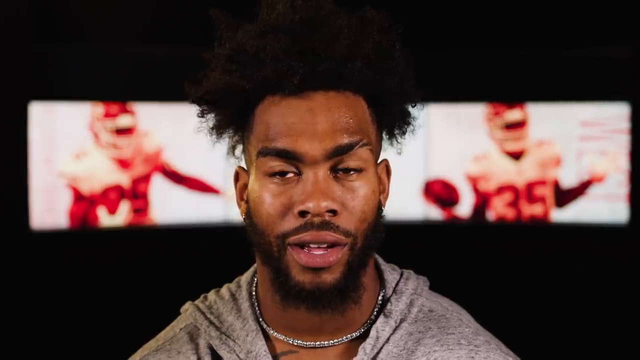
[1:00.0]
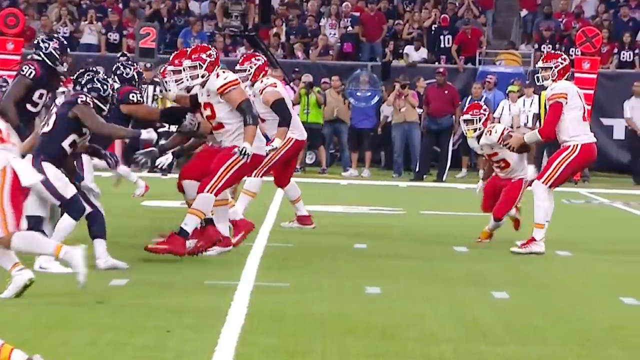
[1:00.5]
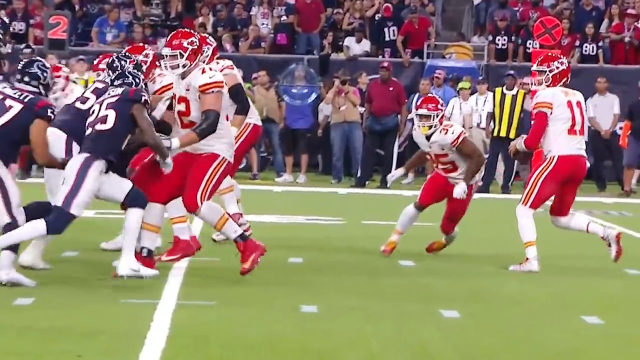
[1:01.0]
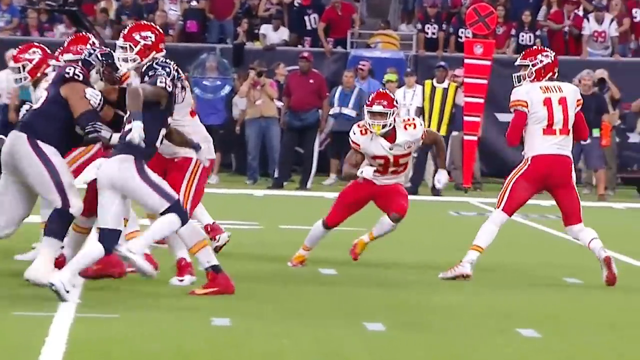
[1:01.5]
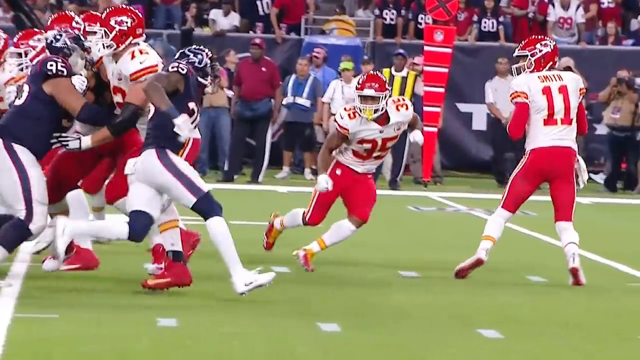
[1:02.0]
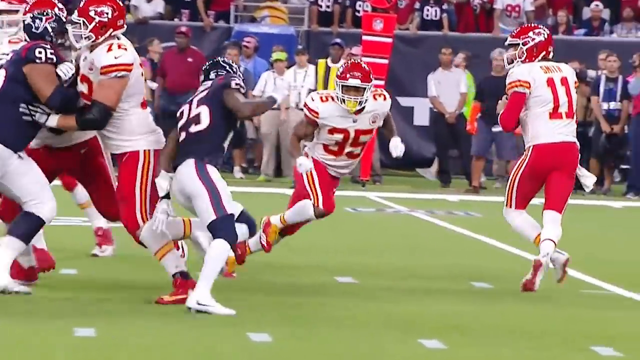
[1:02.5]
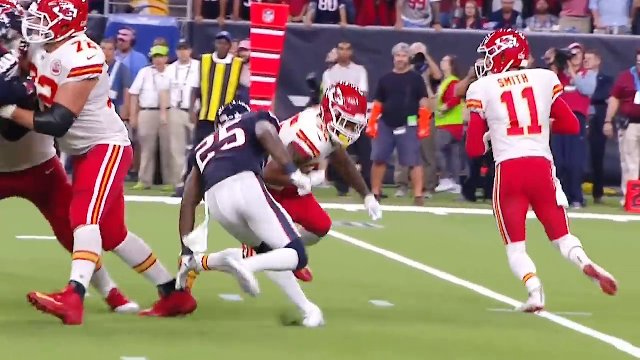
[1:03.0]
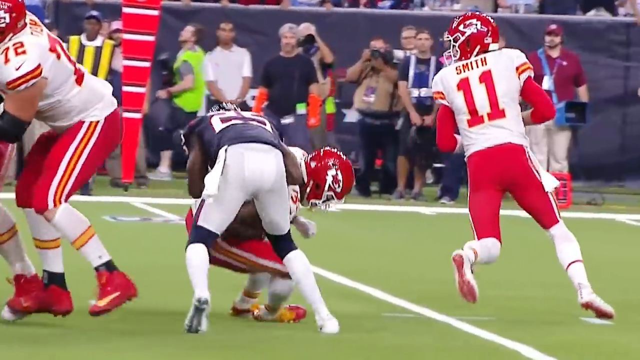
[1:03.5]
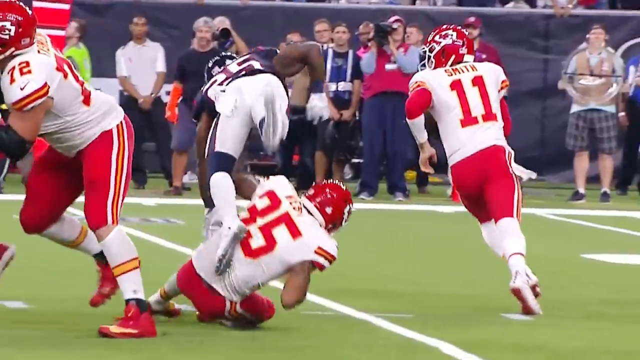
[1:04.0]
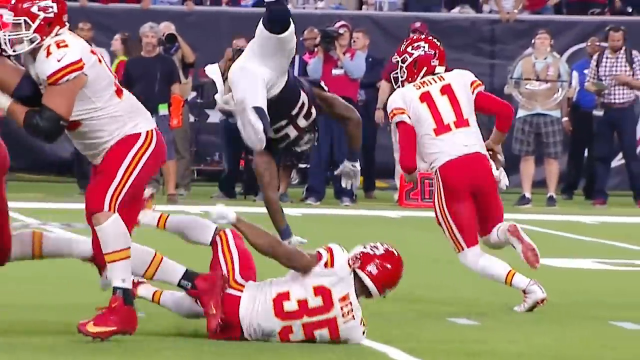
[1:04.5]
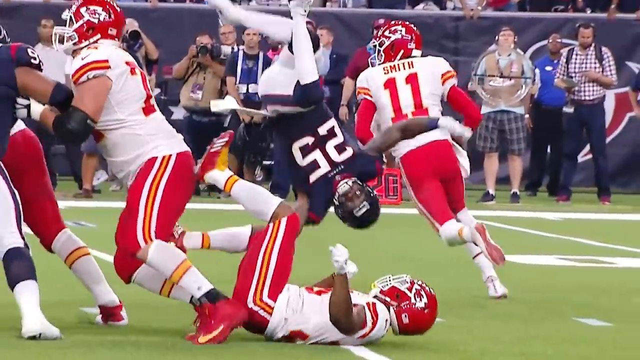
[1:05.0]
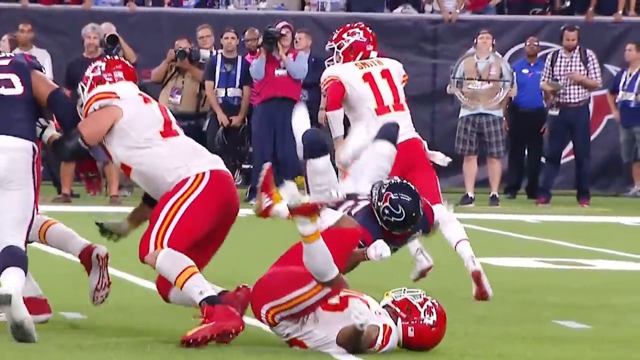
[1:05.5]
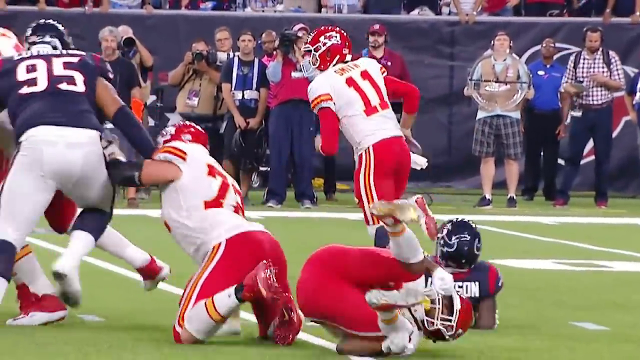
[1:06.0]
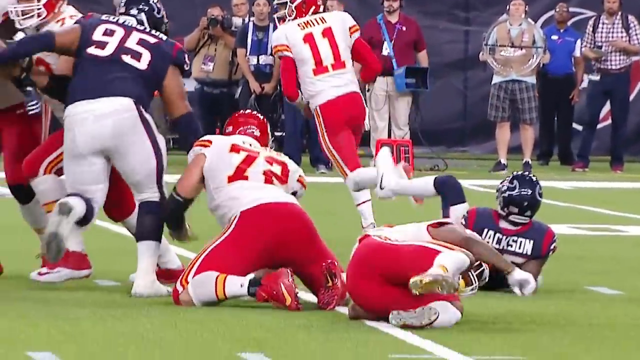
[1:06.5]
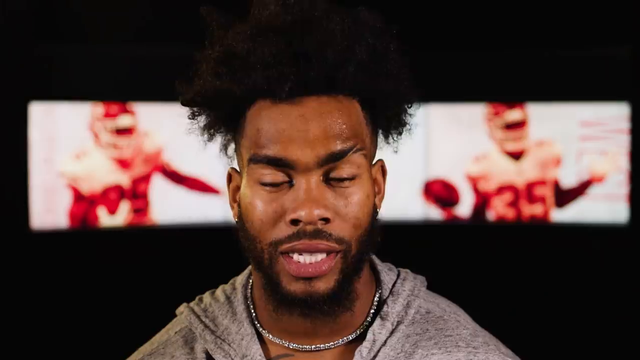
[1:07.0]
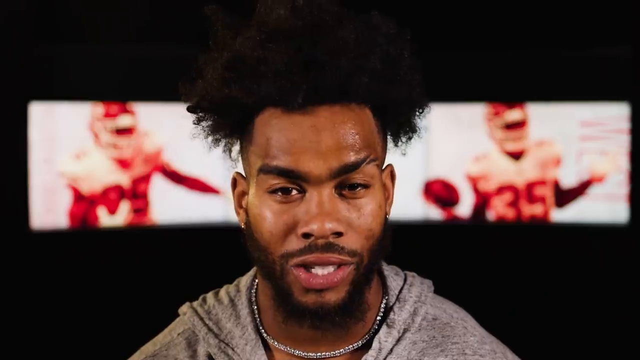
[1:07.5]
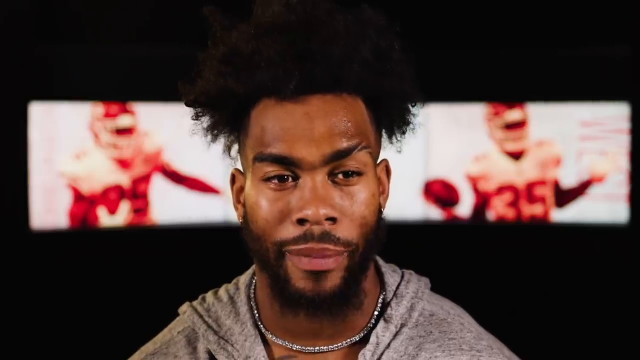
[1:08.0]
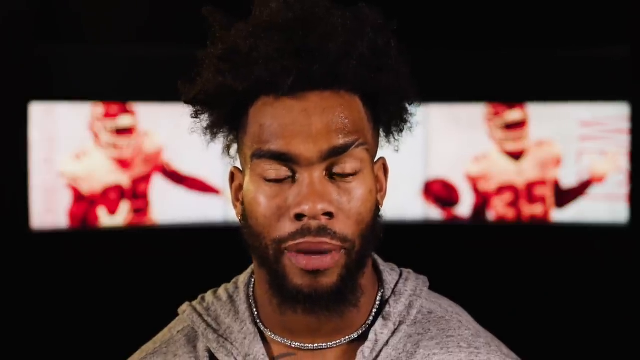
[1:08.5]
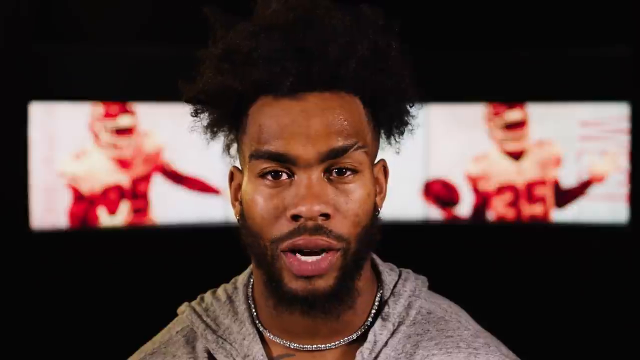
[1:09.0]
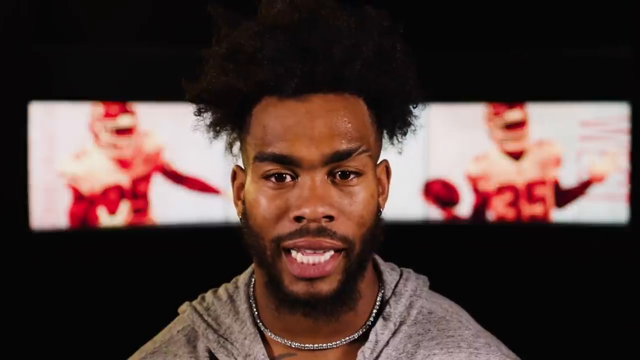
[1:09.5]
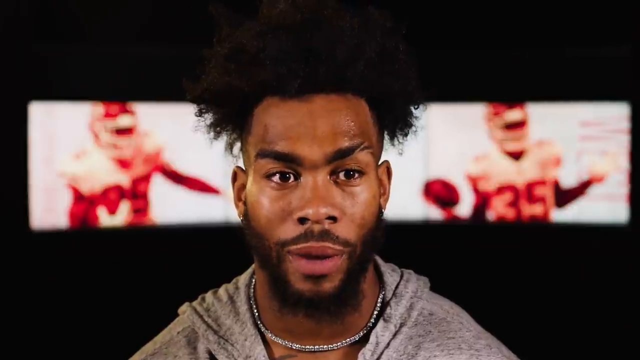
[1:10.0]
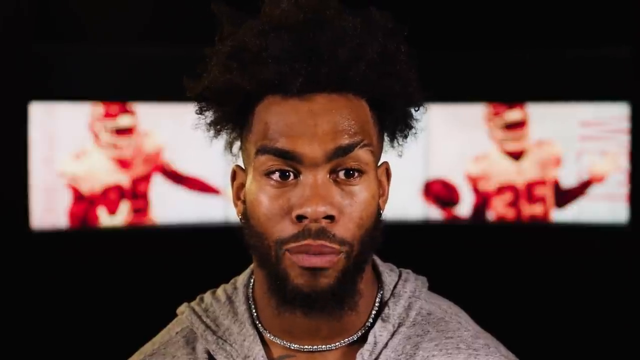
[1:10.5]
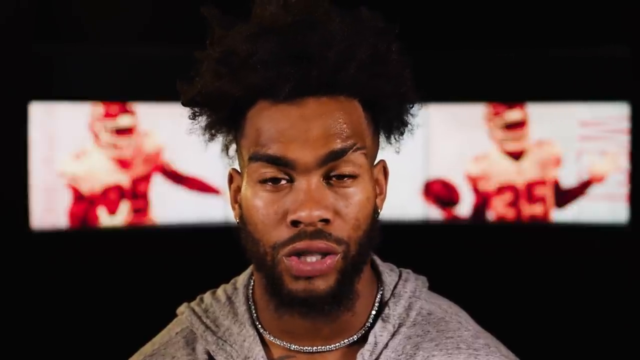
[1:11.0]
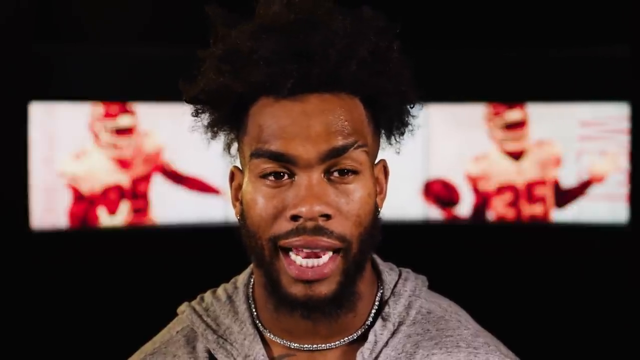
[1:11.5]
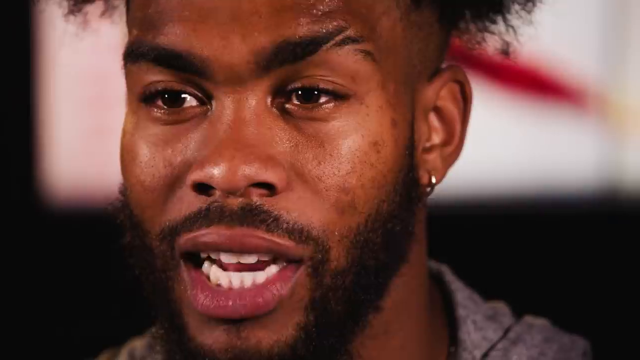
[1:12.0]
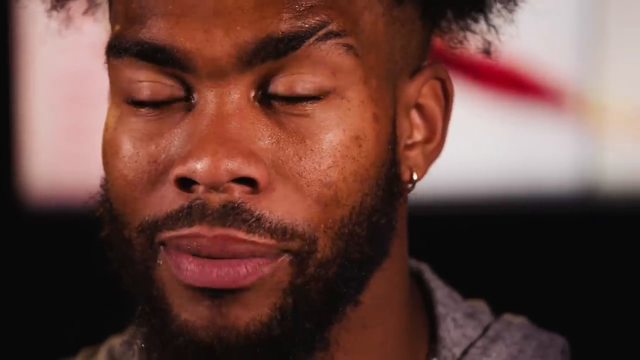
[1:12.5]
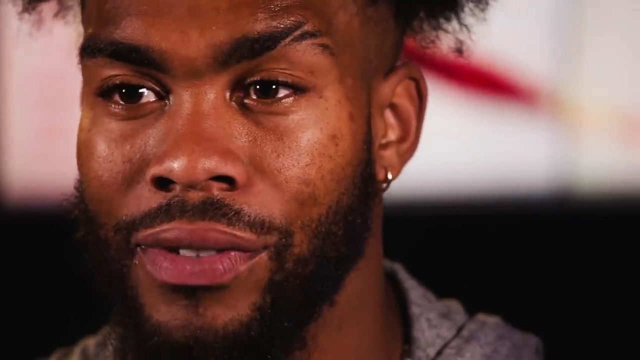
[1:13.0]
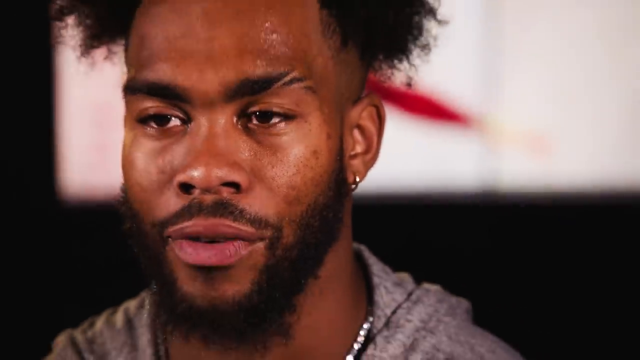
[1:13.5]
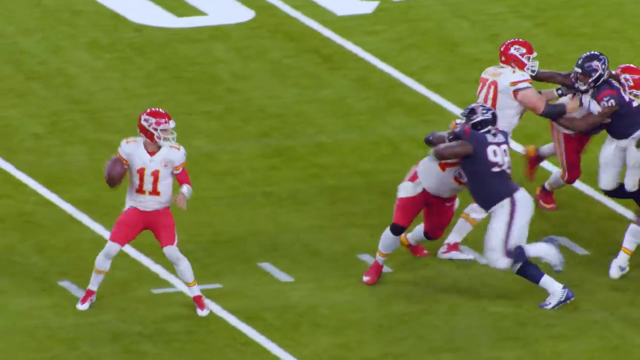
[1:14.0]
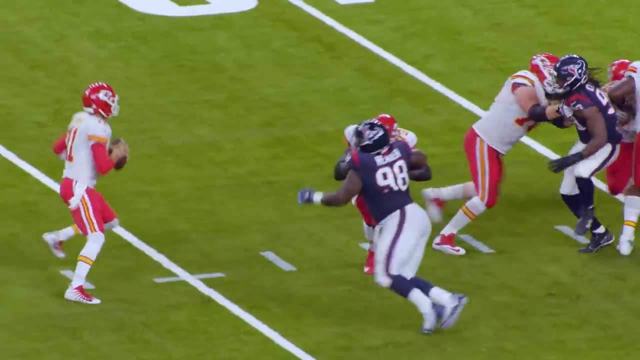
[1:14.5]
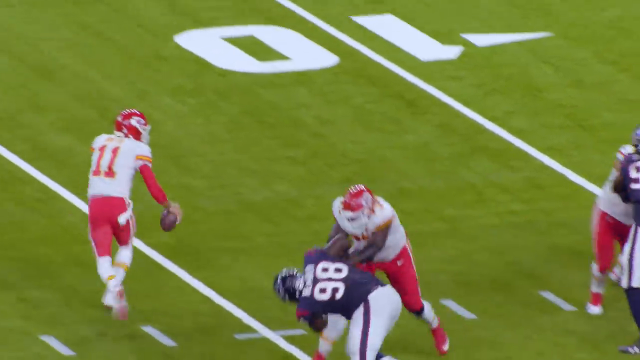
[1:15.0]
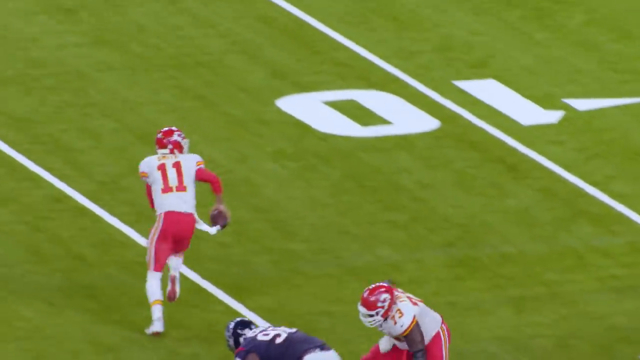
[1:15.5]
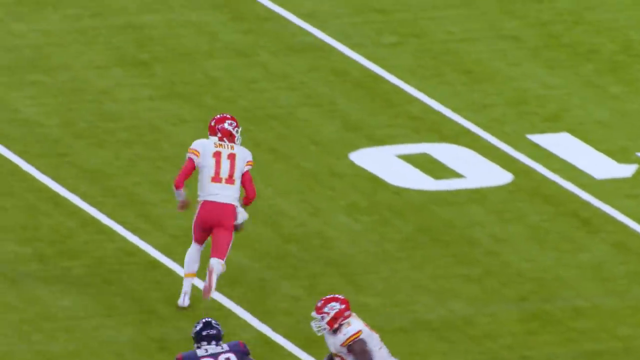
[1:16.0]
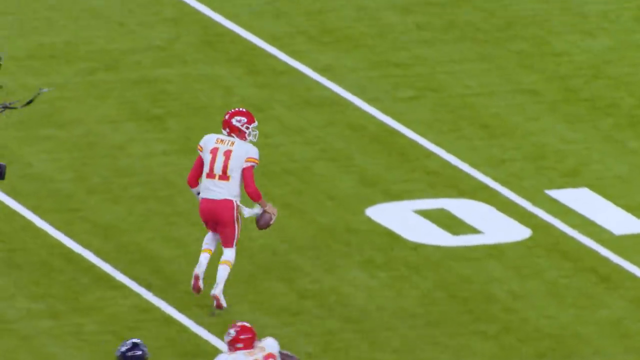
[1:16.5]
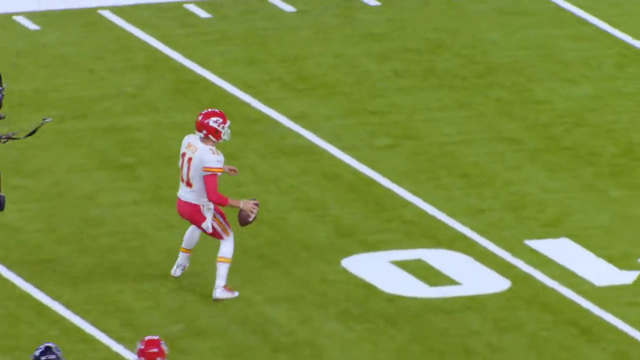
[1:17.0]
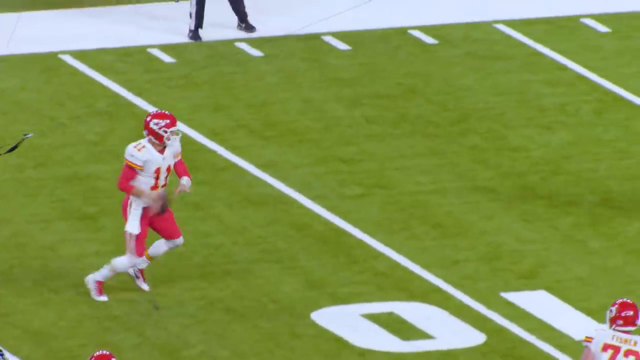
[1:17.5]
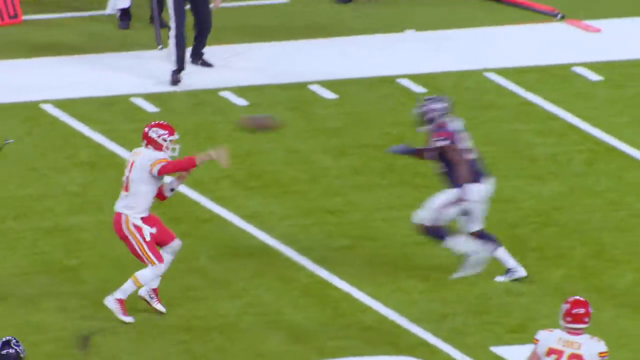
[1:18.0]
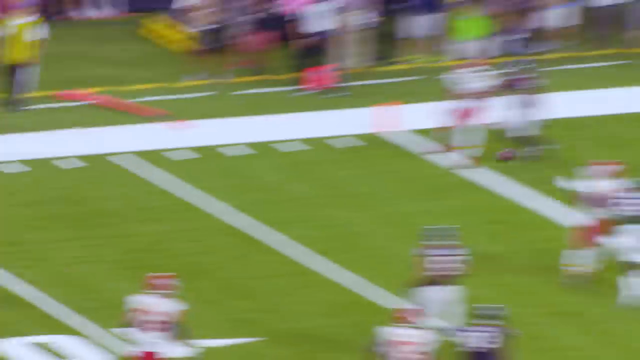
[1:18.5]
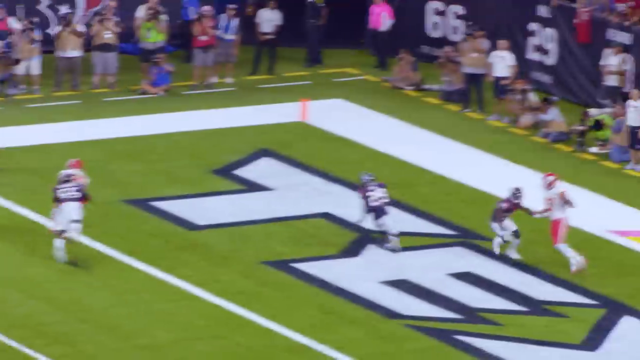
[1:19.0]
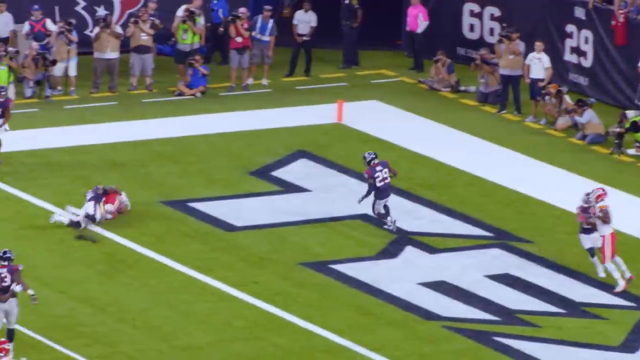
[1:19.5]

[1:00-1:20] The individual speaking to the camera, identified as Jarkandrick West, a former player for the Kansas City Chiefs, continues speaking. The video moves to another action shot of the game between the blue-shirted and white-shirted teams; the Kansas City Chiefs are apparently the white-shirted team with the red helmets. The playing surface covers about half of the background, and above it is the audience. Many of the people there are standing, so they may be team support officials; above them is a barrier, with the paying public slightly in the background. Another angle shows the defensive play in which the blue-shirted individual is made to turn a somersault. The quarterback releases the ball as he runs off to his right, then stops.